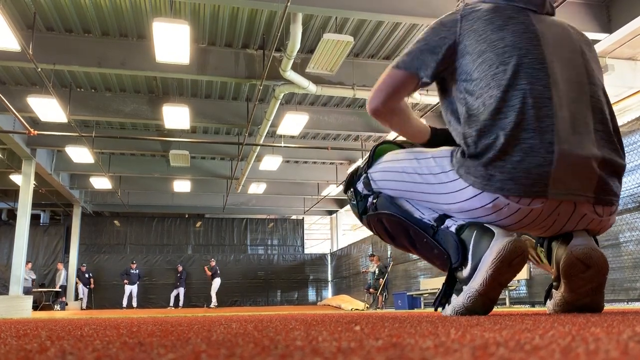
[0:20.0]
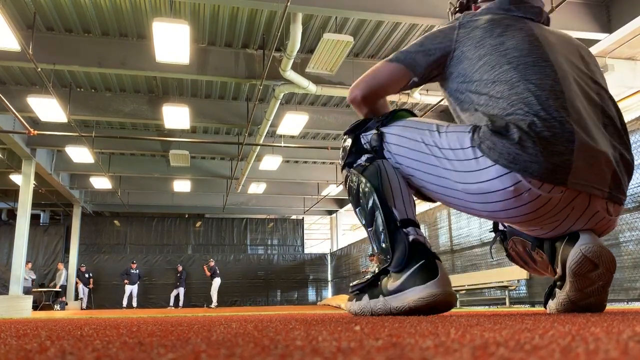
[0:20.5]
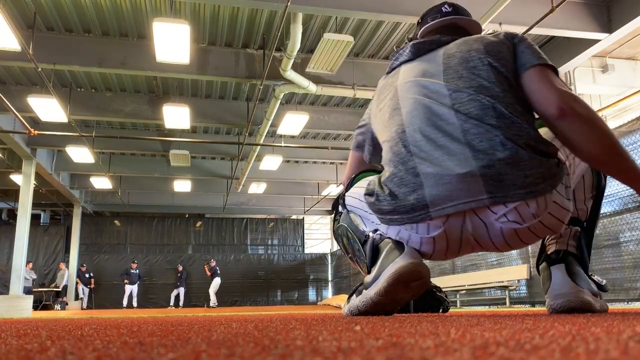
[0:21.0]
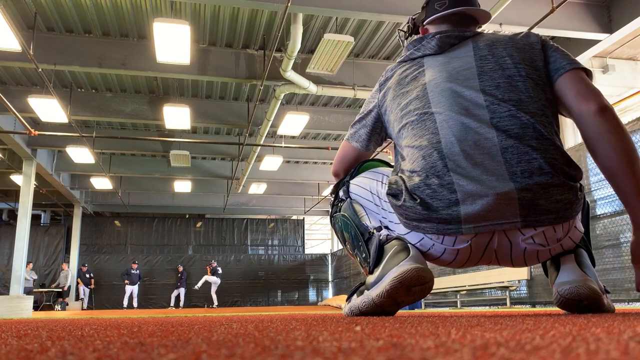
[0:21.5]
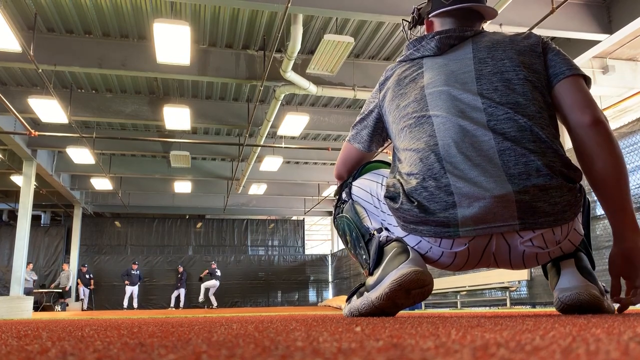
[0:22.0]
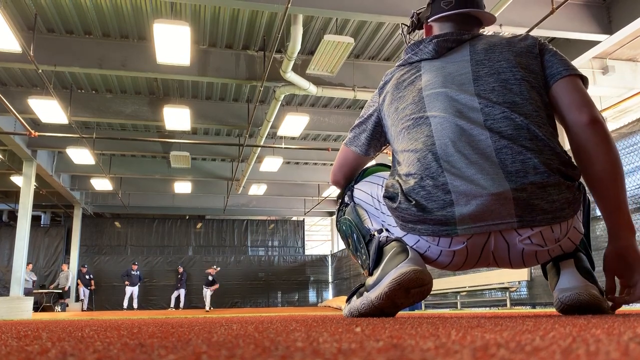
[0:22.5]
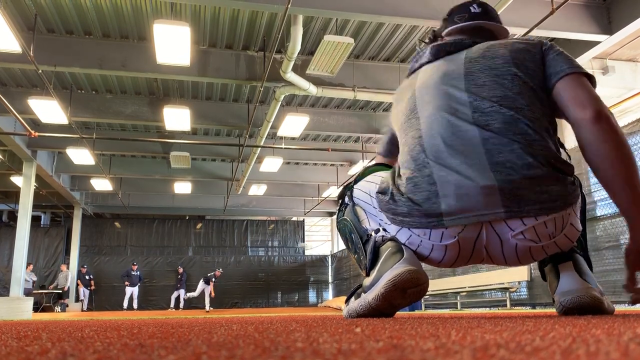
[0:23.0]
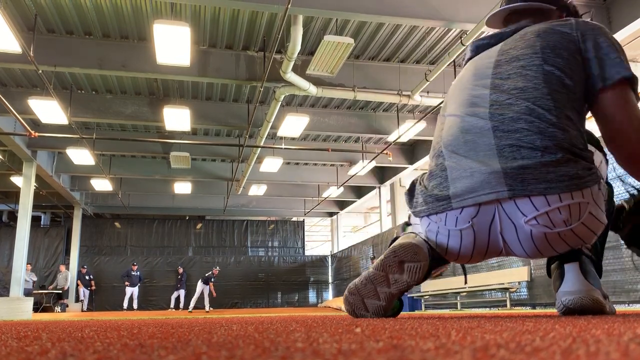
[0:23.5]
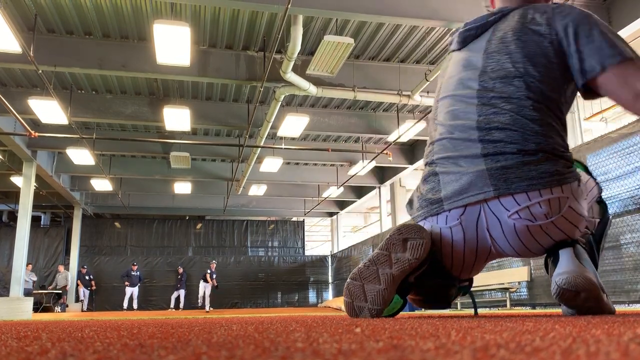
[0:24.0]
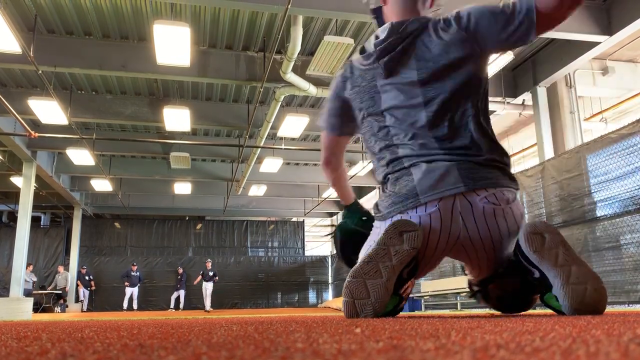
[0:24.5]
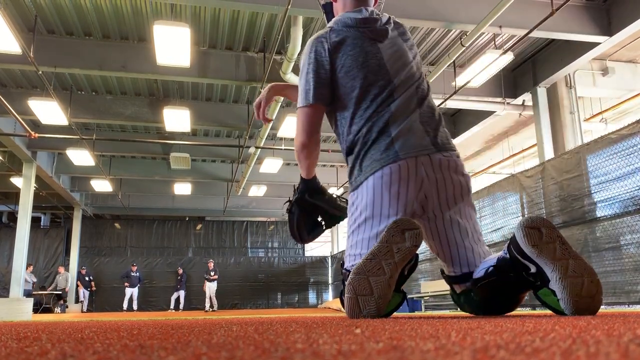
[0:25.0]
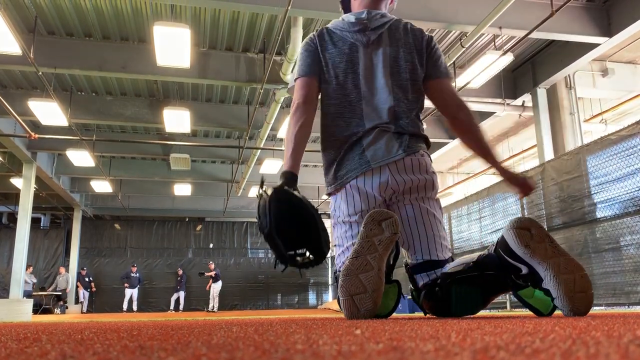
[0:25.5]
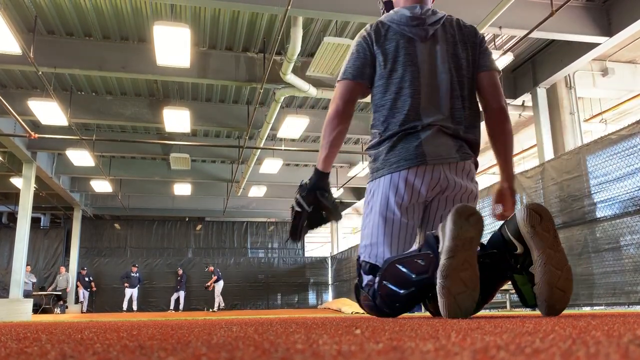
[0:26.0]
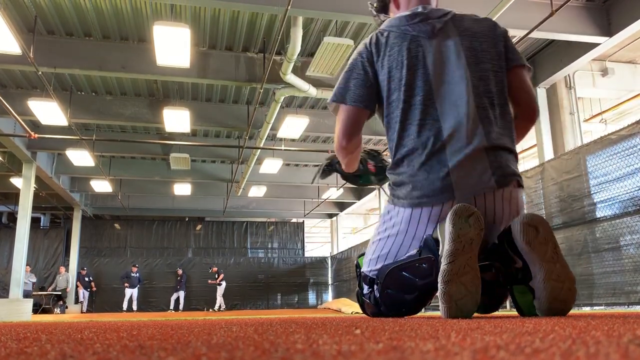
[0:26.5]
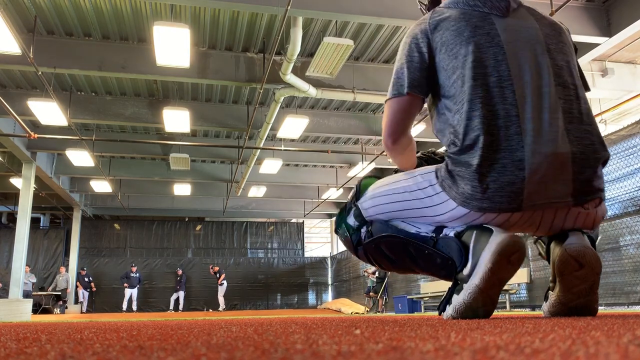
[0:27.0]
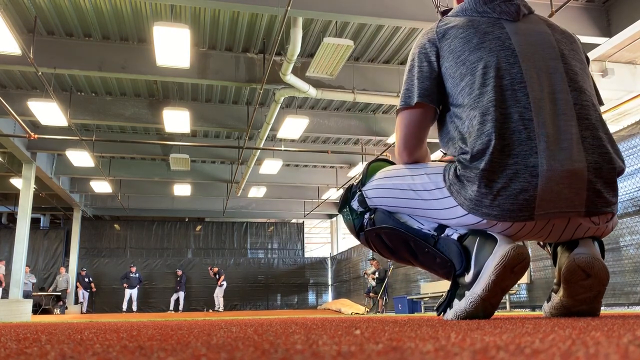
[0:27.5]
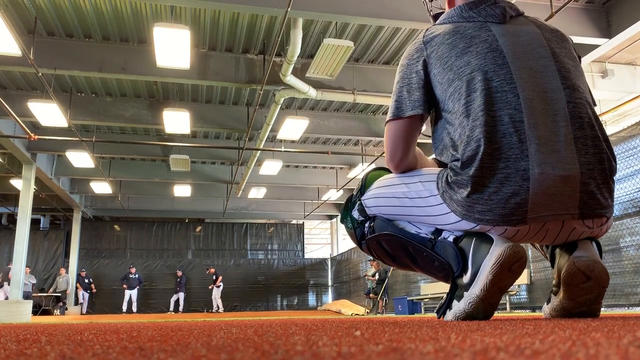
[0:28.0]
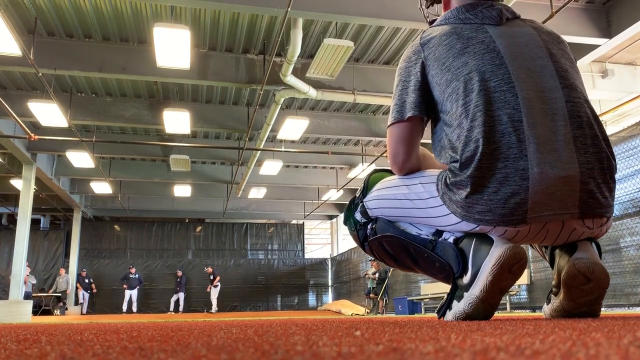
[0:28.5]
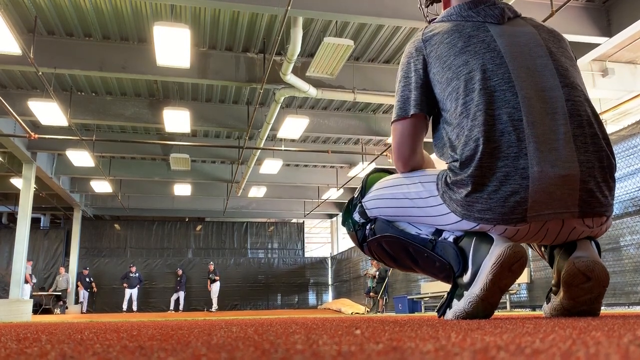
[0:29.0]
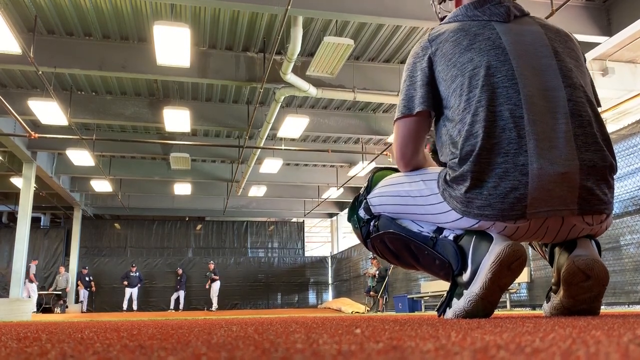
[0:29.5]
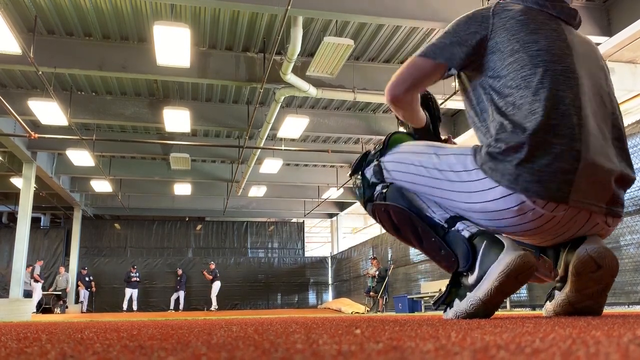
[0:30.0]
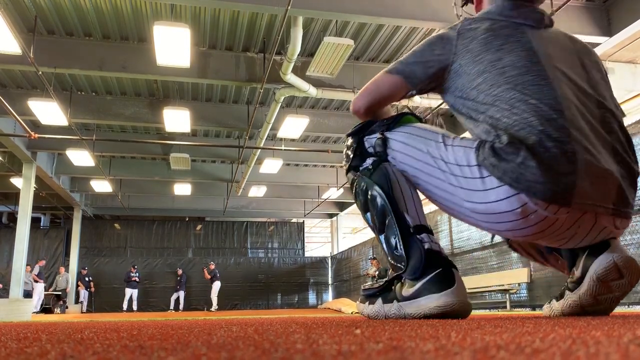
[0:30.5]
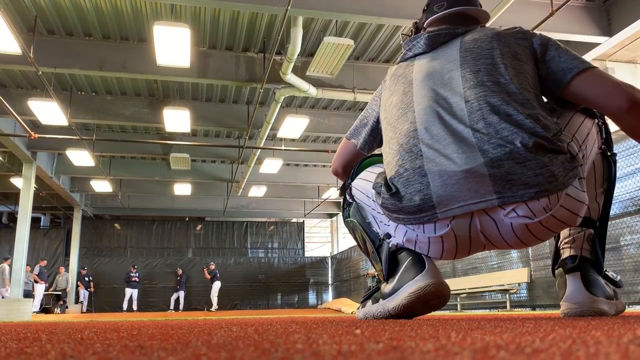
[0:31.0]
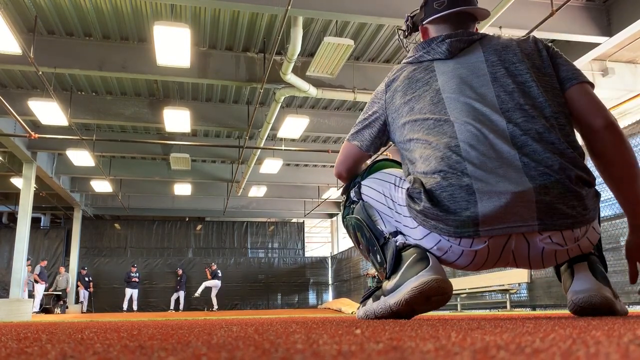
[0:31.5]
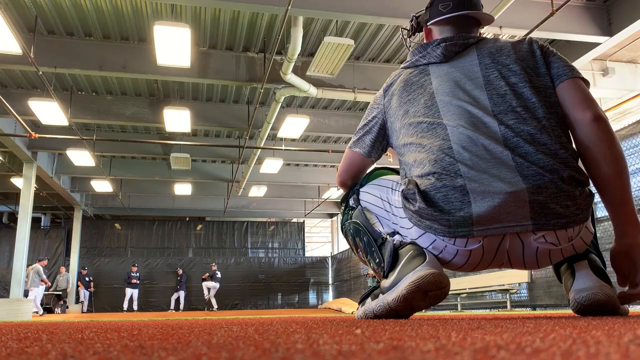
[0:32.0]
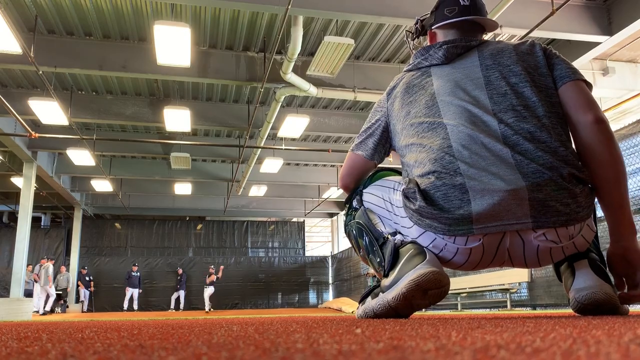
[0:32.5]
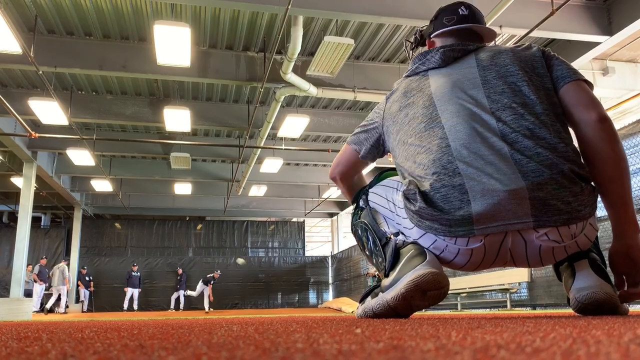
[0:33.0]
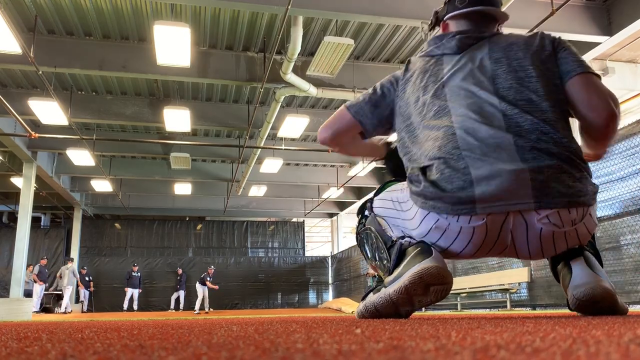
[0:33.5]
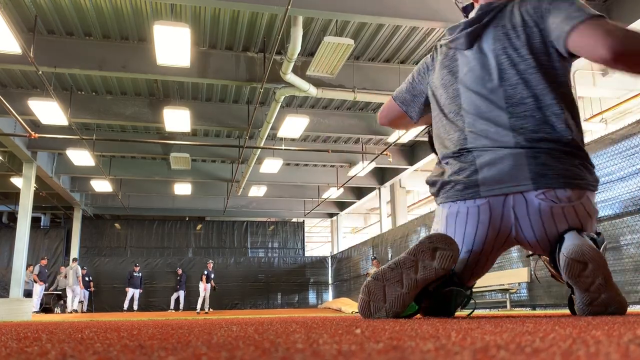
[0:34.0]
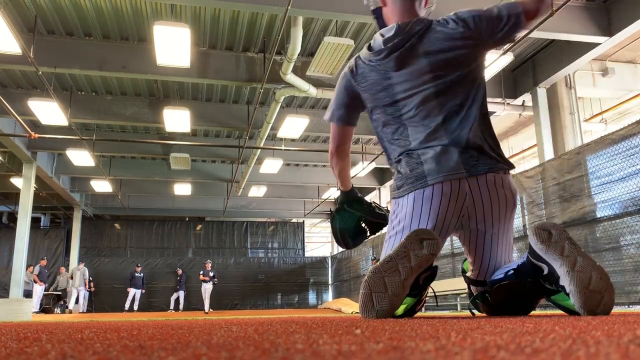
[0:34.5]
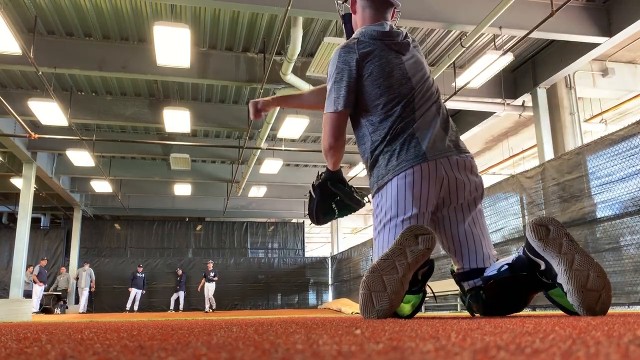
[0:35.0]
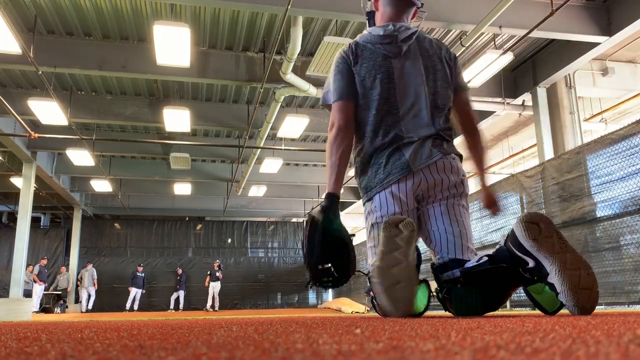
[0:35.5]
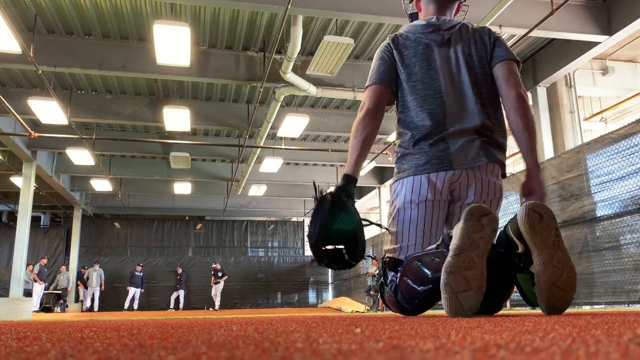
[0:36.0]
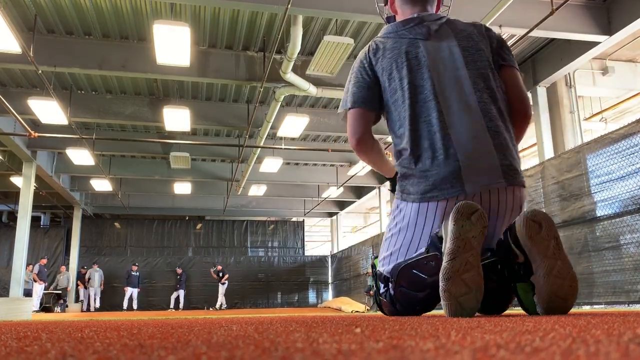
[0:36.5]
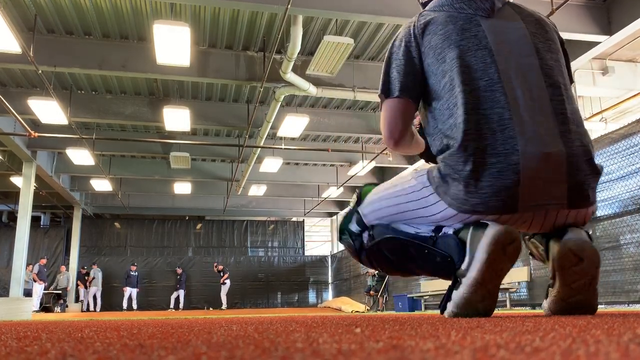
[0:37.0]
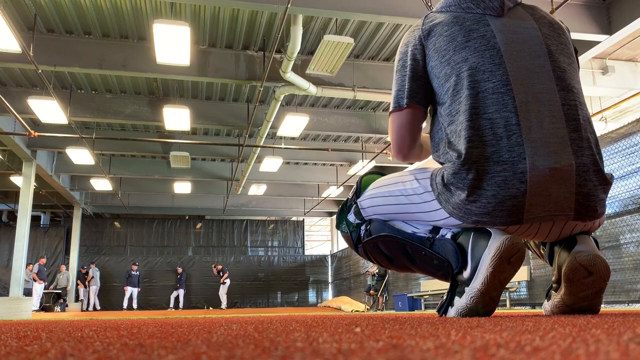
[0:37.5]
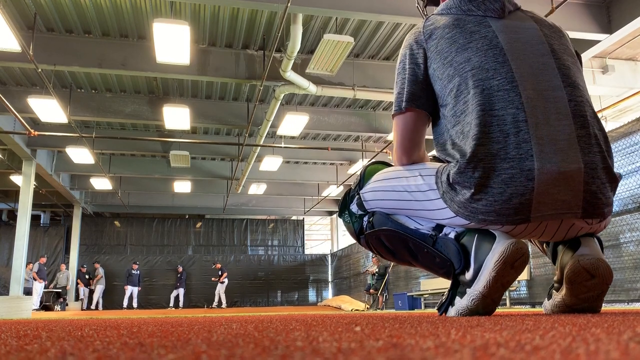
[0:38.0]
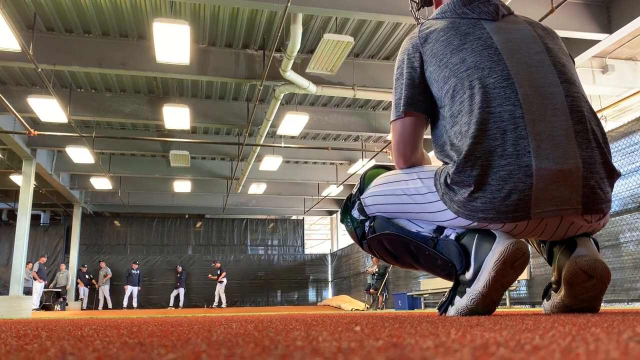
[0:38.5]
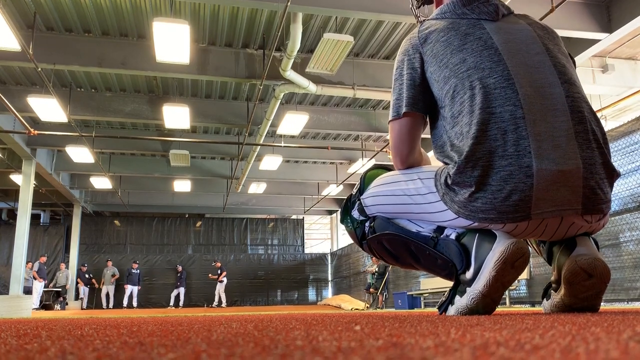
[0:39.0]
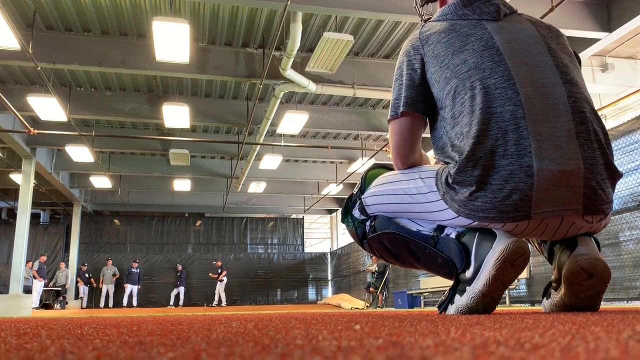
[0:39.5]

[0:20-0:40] The pitcher keeps throwing to the catcher, who receives each ball, and the sequence repeats a few times. Against the wall on the right side of the frame, two other people stand watching the throwing practice. A different angle appears, still from behind the catcher but showing a bit more to the right of the catcher. The setting is indoors but not a garage. The roof looks to be metallic, with lights on it, and the wall has large windows that let a lot of light in. The walls are not solid; they look like chain link fences covered with a mesh. Toward the end, two more people approach.